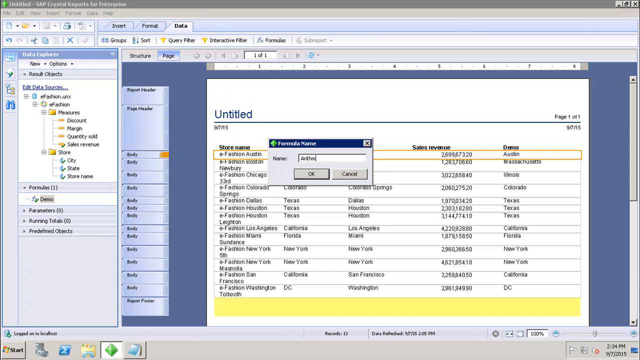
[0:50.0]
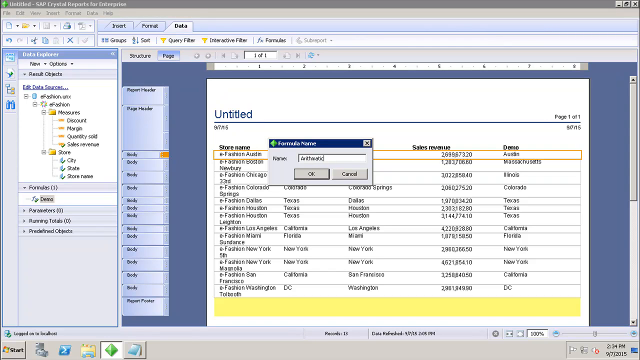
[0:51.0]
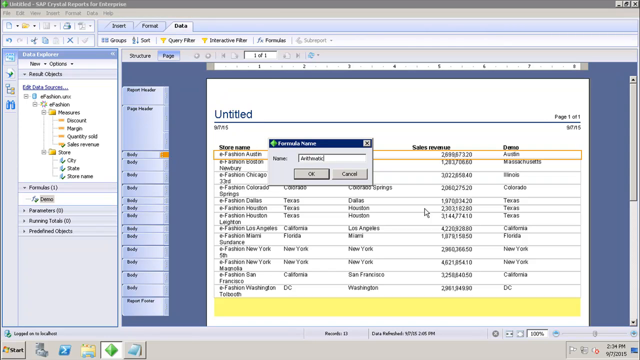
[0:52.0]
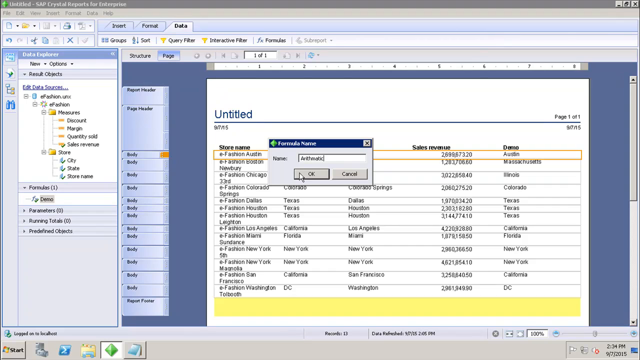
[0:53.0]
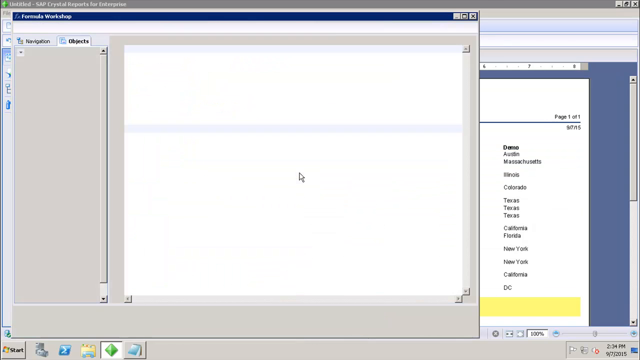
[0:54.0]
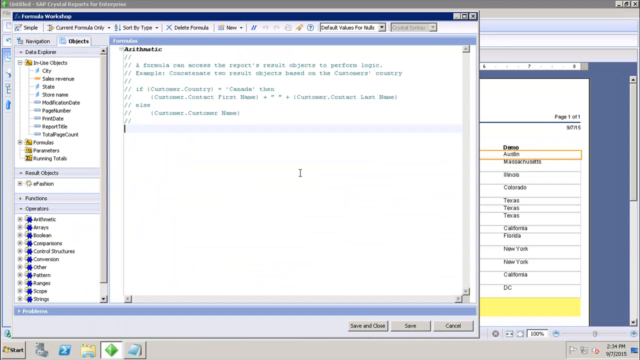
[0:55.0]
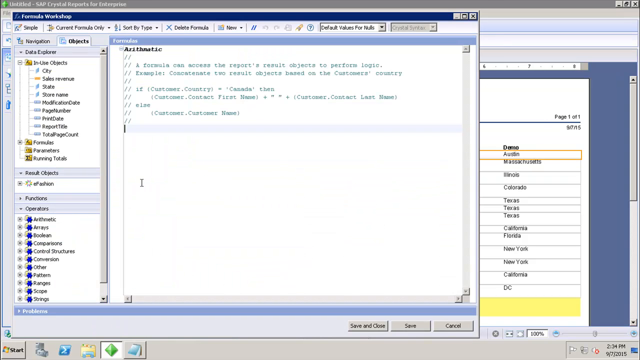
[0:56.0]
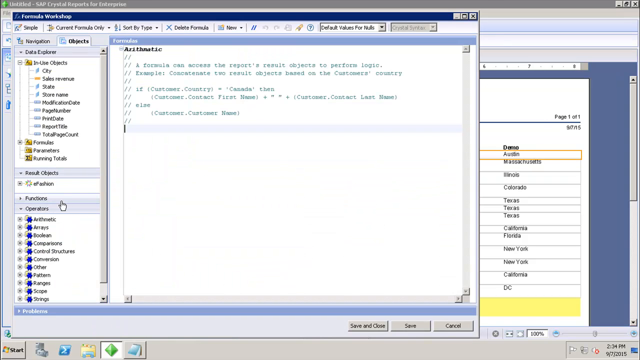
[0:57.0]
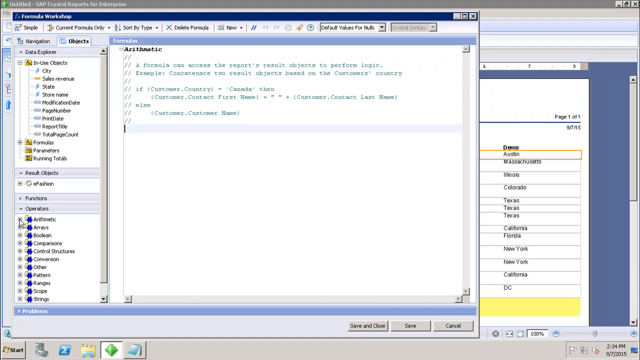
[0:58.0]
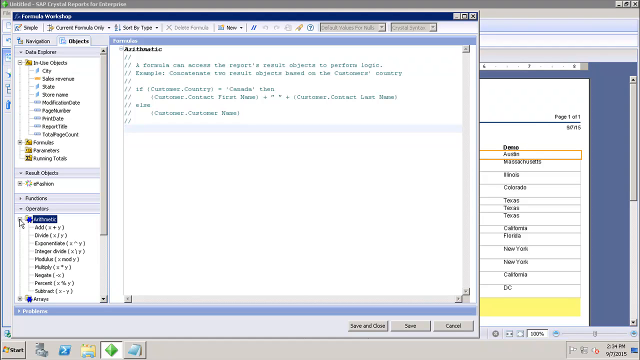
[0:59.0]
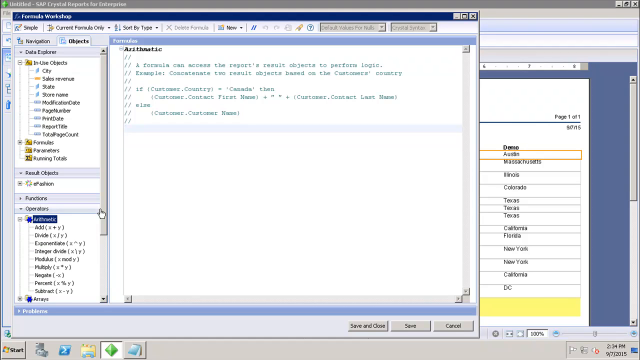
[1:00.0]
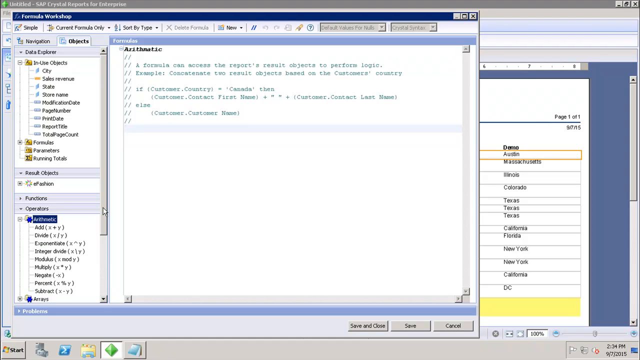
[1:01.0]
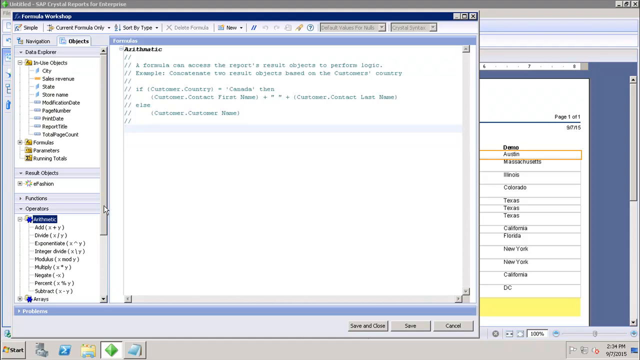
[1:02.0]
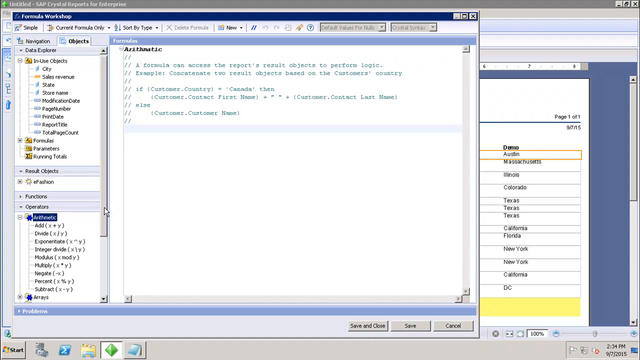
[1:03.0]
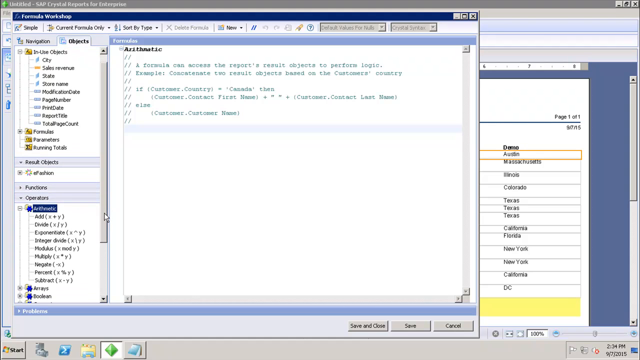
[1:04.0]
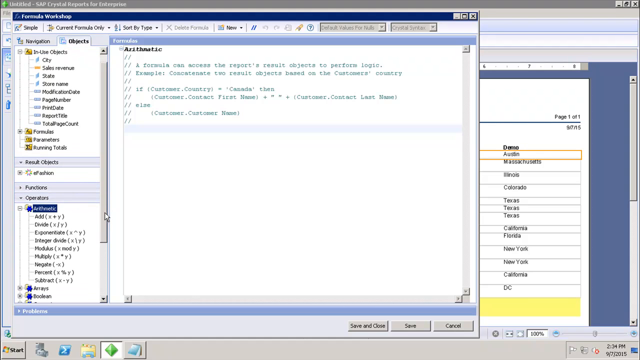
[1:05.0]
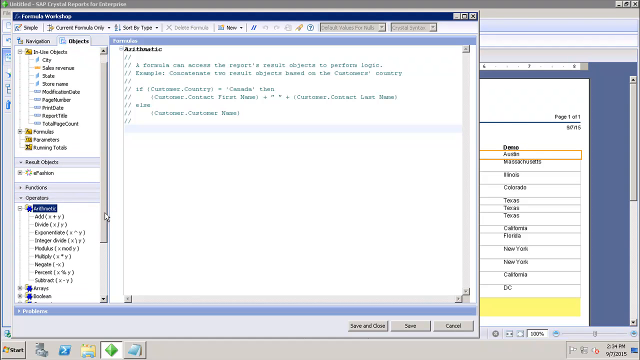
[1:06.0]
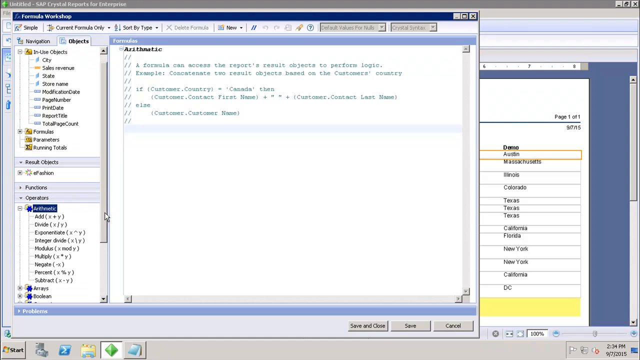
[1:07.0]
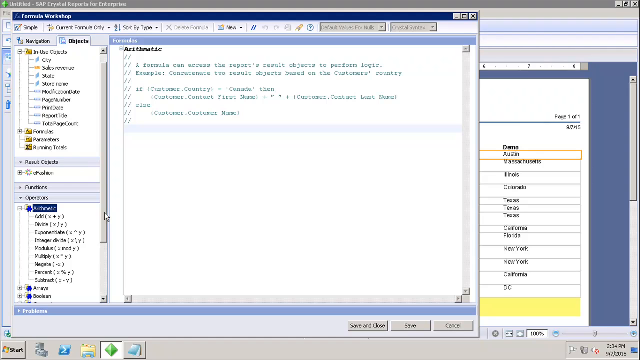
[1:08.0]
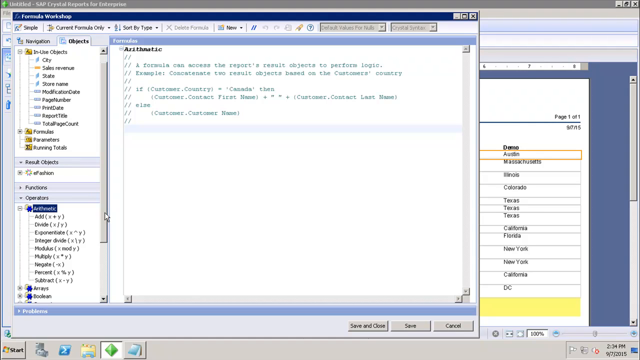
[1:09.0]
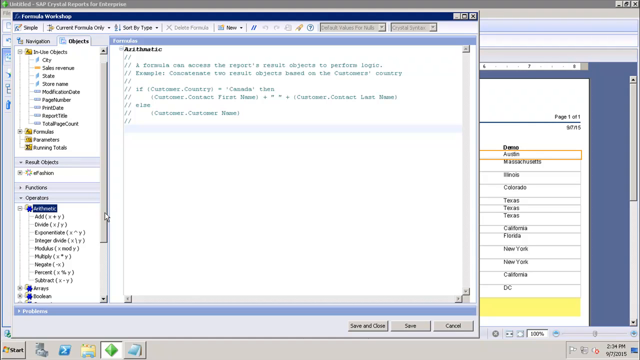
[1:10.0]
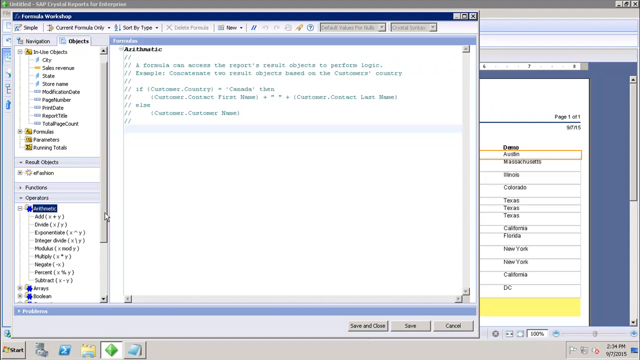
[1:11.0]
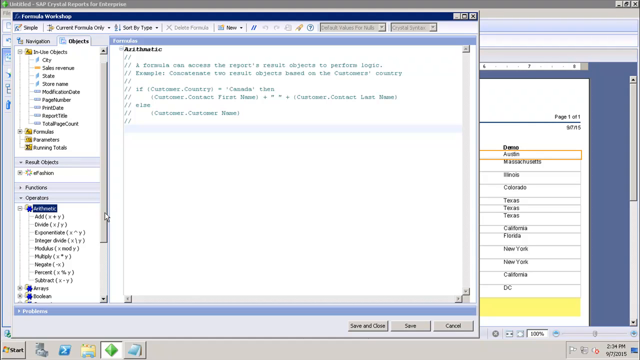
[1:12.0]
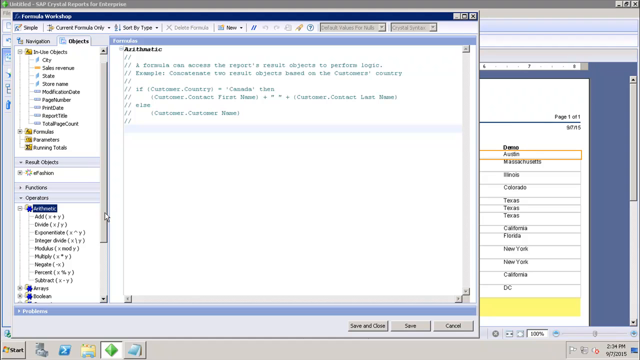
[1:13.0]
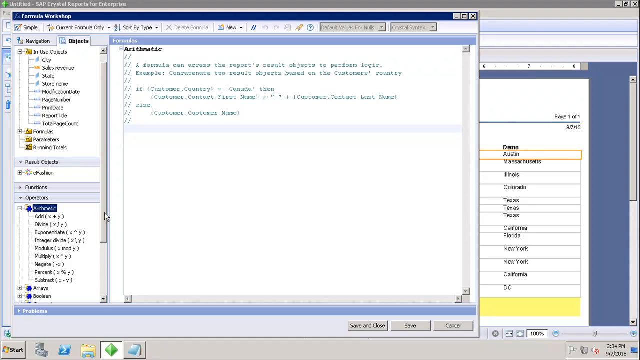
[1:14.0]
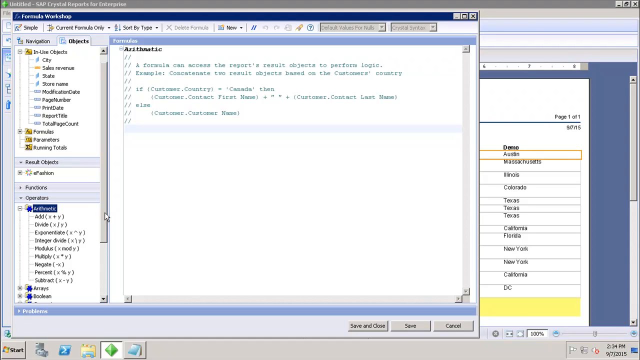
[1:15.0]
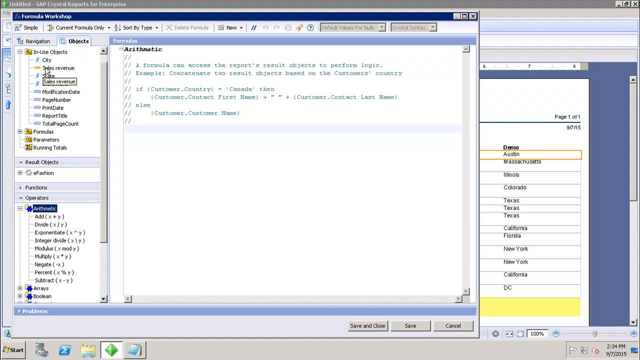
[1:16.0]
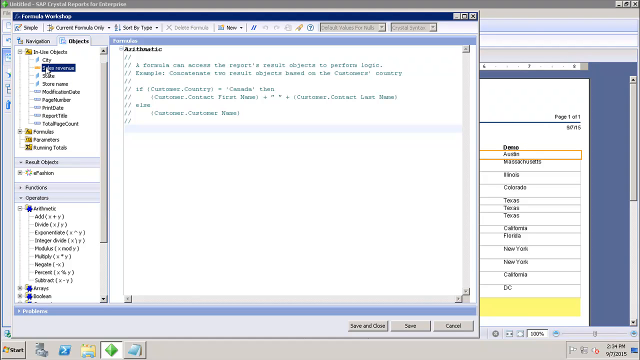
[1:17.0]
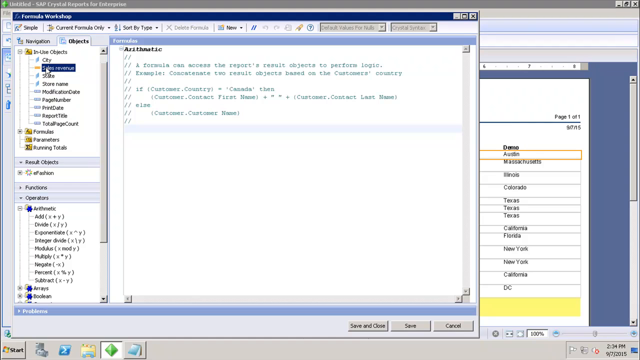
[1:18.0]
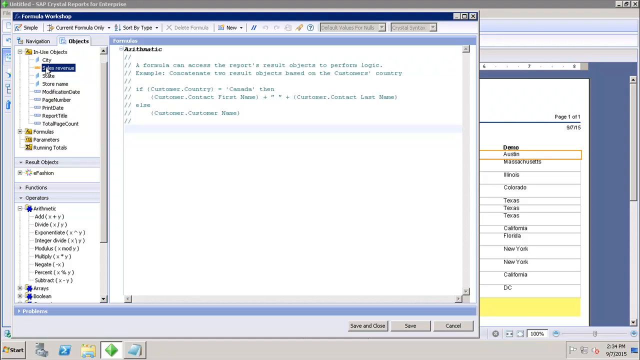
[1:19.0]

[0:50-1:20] The person is still in the untitled document. A field seems to read "formula name," and a name field contains something typed that looks like it begins with "A," though the rest is too blurry to read. OK and Cancel buttons are visible. The person types something more. In the top corner, blurry black text apparently reads "arithmetic." Below it, text in a light mint-green color reads "a formula can access the report's result objects to perform logic. For example," followed by words that are hard to read, possibly including "country." The person then uses the mouse on the left-hand side, apparently in an operations section, scrolling down past items including add, divide, possibly exponents, integer divide and multiply. They do not click anything in that section, and its title is not visible because the view is zoomed in.